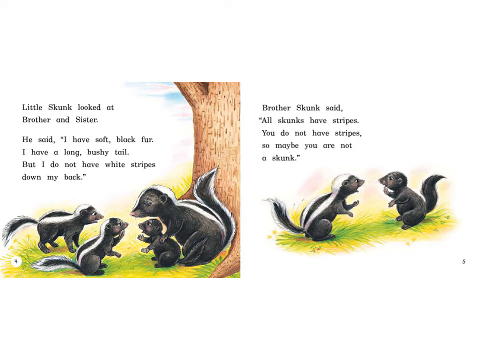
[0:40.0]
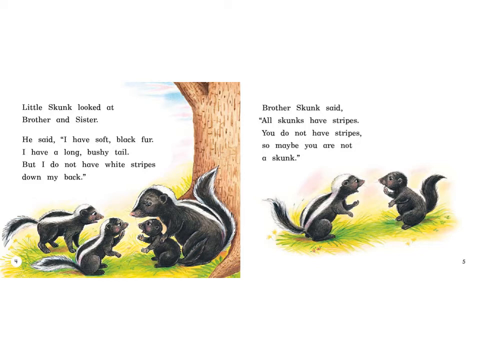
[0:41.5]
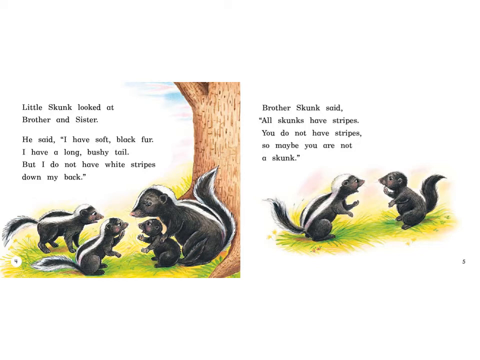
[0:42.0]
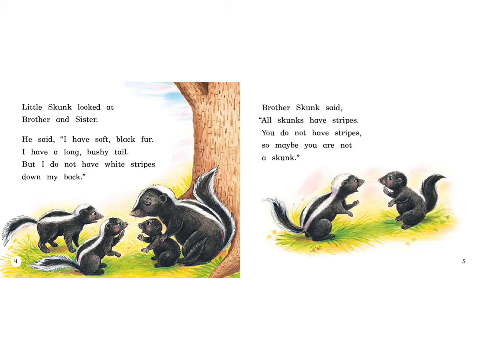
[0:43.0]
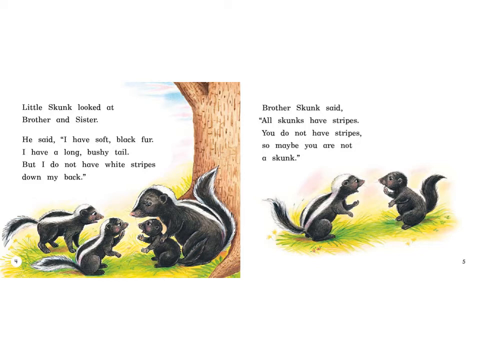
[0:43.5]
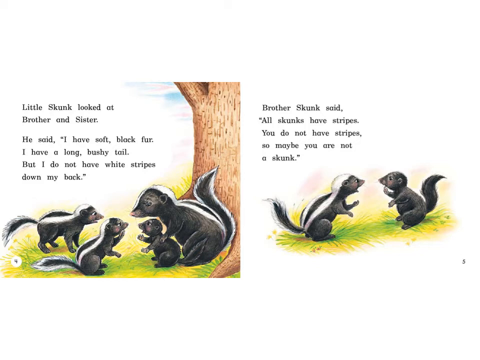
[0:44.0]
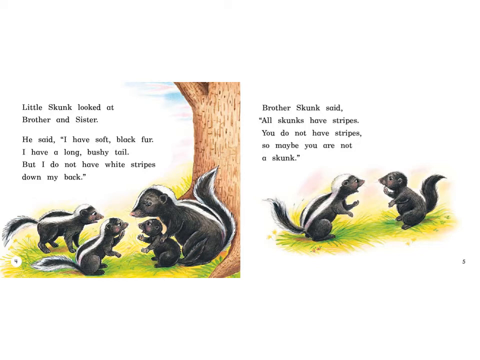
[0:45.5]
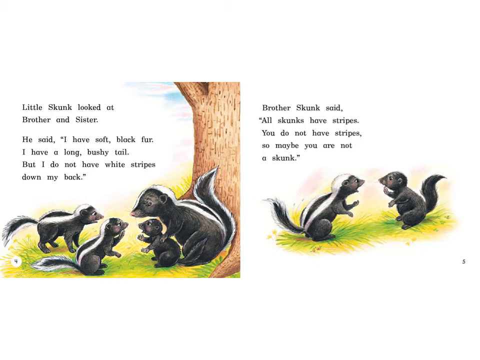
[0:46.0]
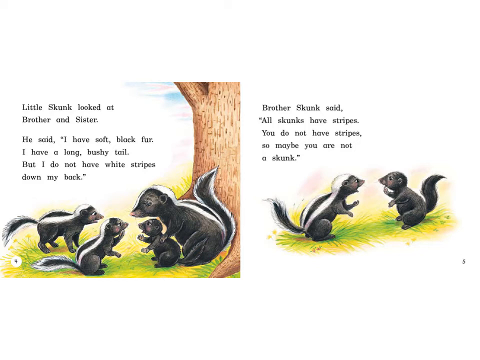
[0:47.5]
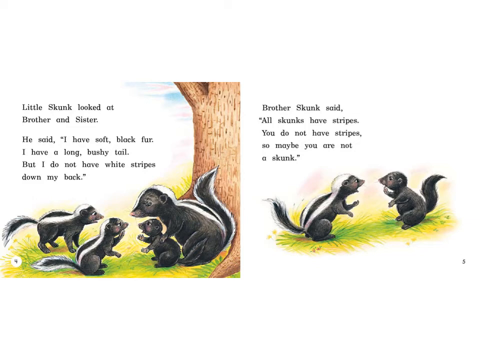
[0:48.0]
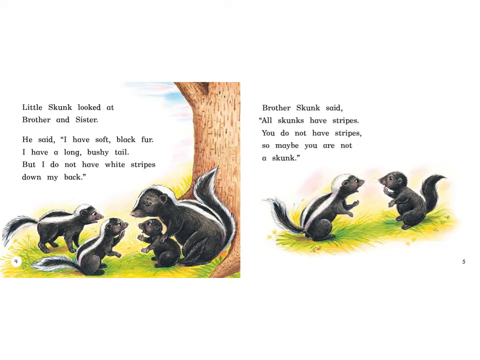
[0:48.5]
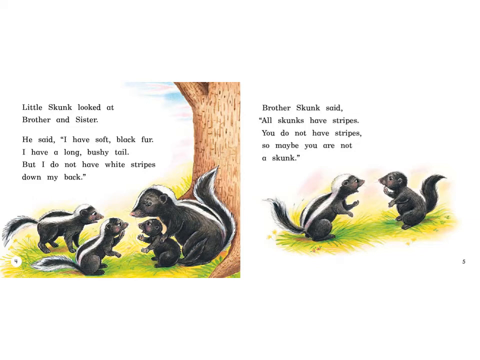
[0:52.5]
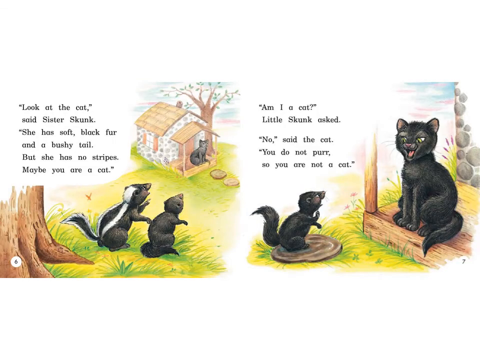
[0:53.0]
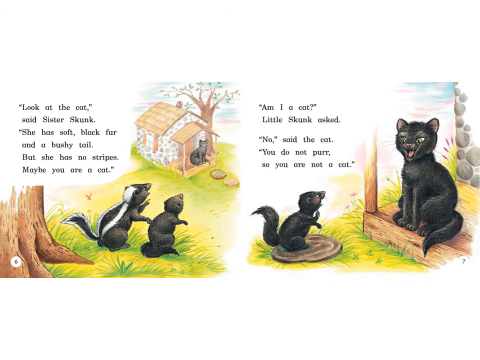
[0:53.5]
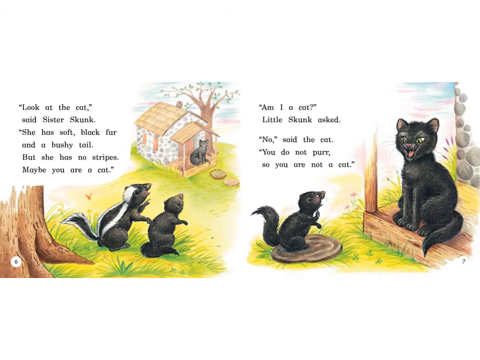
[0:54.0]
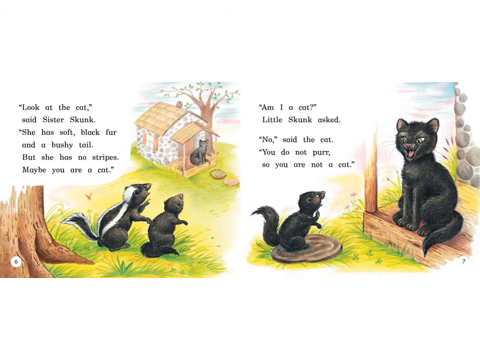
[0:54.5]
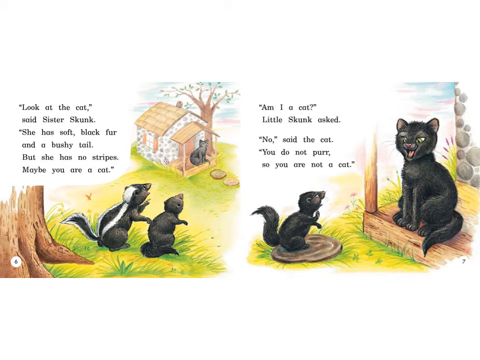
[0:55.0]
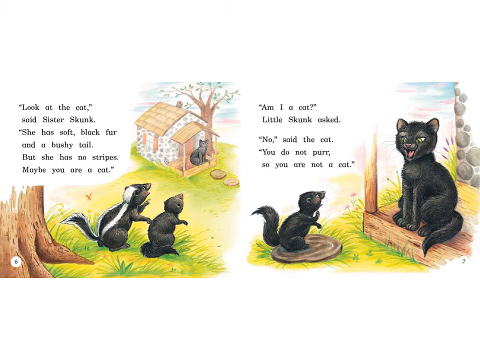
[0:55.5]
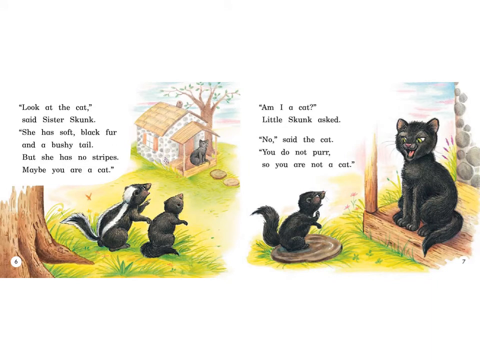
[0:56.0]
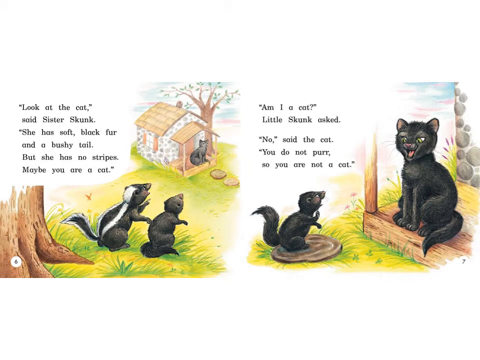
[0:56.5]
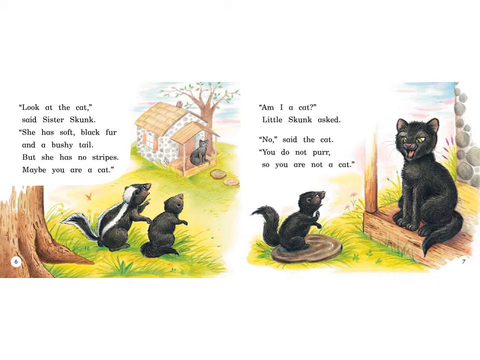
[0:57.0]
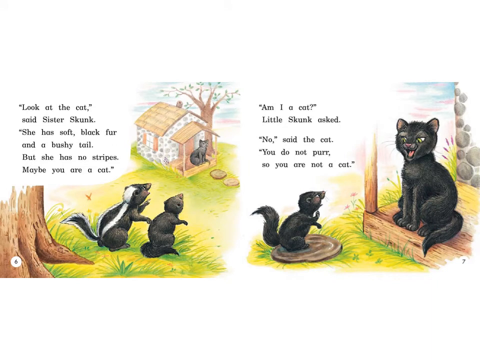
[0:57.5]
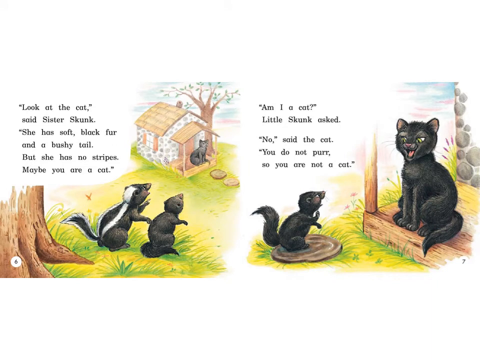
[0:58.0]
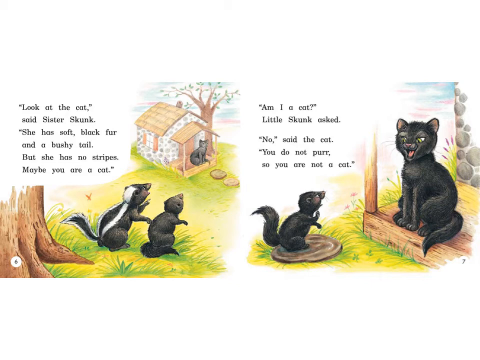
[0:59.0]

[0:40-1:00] Two skunks and a cat are seated outside a house in a garden. The text reads "Little skunk looked at brother and sister. He said, I have soft black fur, I have a long bushy tail, but I do not have white stripes down my back. Brother skunk said, all skunks have stripes, you do not have stripes, so maybe you are not a skunk." The skunks look like they start arguing. On the next page, two skunks look at a cat seated outside a house in the garden, and the text reads "Look at the cat, said sister skunk. She has soft black fur and a bushy tail, but she has no stripes. Maybe you are a cat." In the next scene the text reads "Am I a cat? Little skunk said. No, said the cat. You do not purr, so you are not a cat." The cat is seated in front of the entrance of the house on top of a wooden block, and the skunk is in front of the cat.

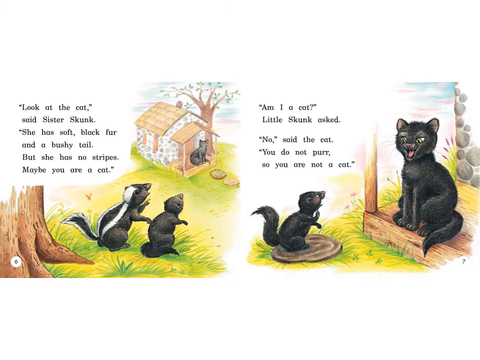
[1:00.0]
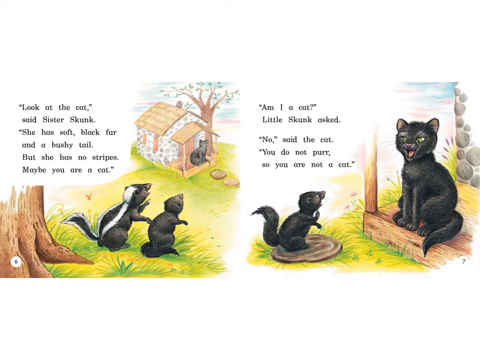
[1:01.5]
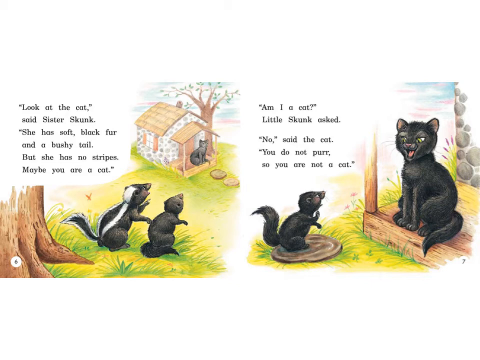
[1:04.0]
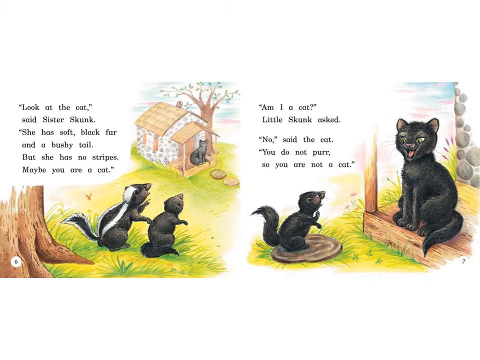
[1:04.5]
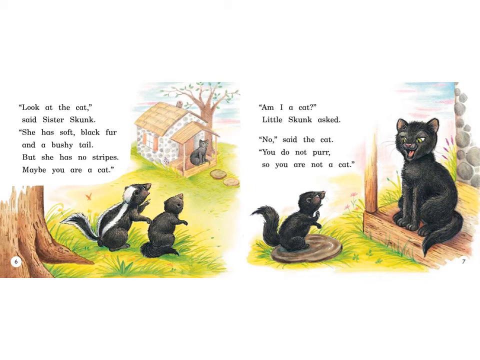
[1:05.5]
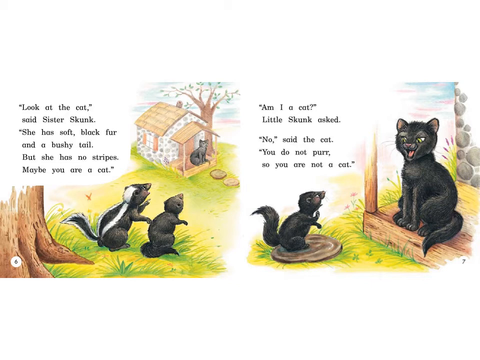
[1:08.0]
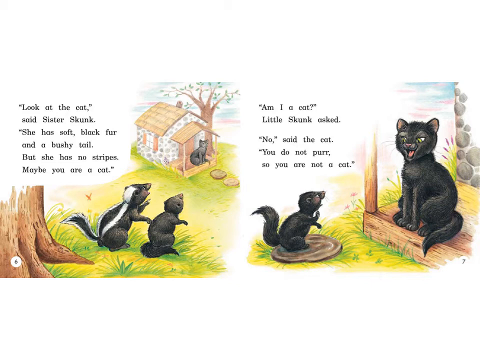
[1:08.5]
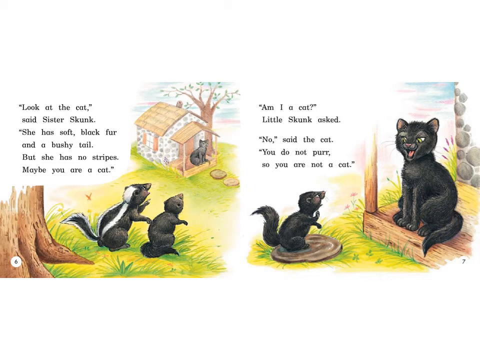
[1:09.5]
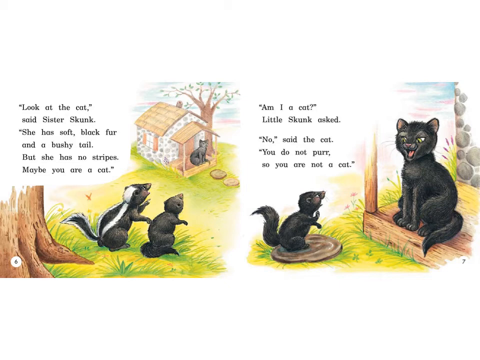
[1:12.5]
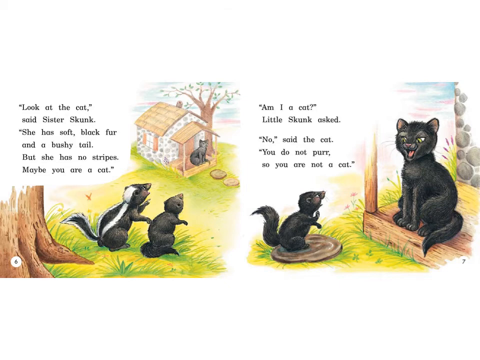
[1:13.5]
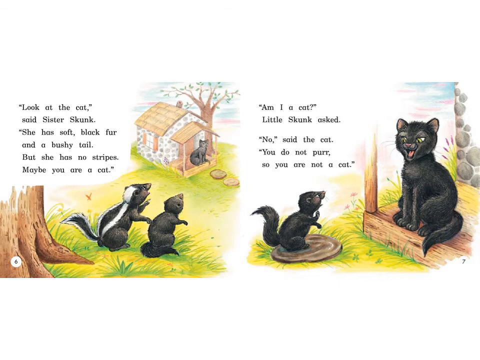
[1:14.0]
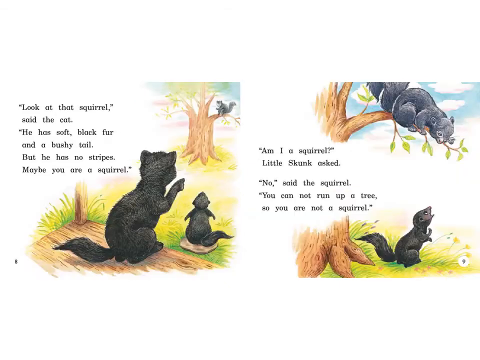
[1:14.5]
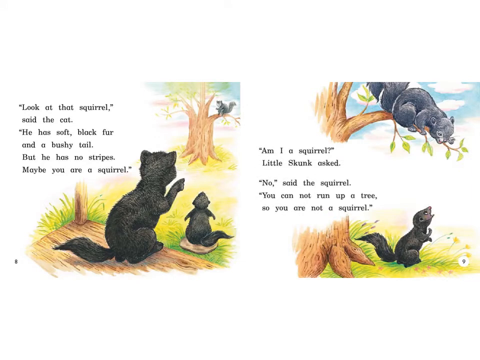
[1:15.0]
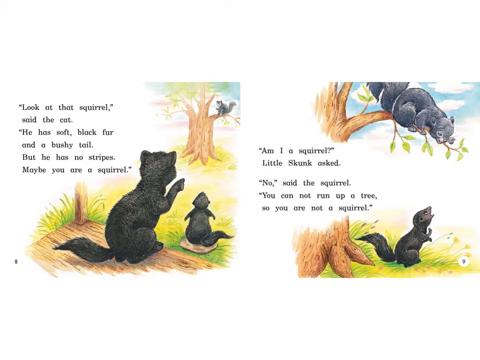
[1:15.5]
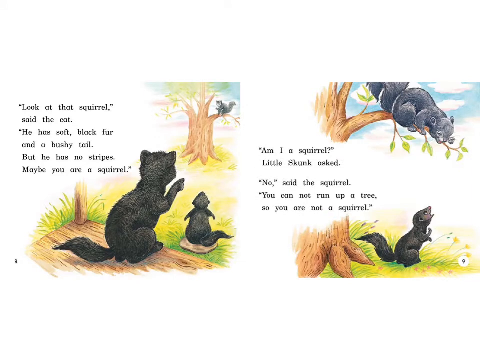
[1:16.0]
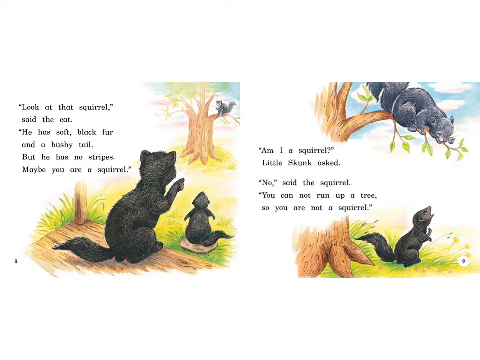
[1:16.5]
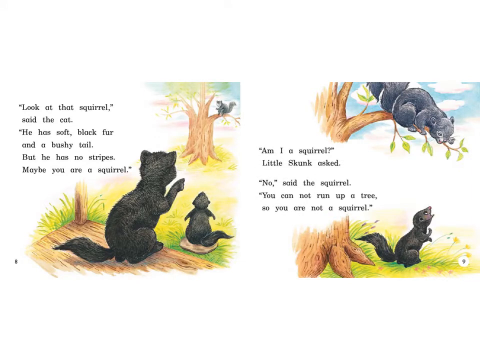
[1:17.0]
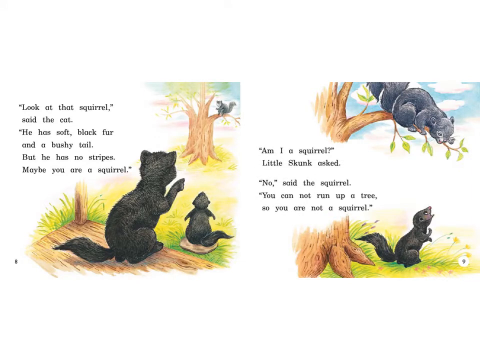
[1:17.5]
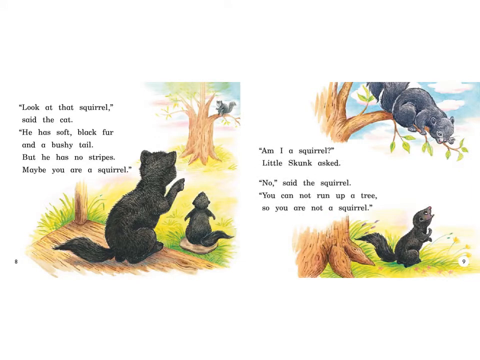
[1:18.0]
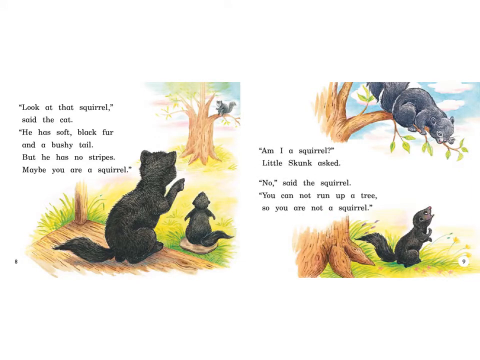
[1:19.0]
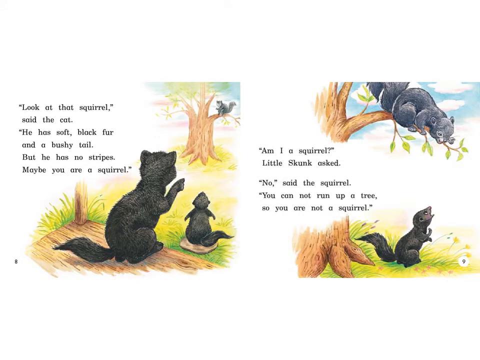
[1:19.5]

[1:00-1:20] Two skunks and a cat appear in a garden; the cat is seated at a house with a tree behind it. The text reads "Look at the cat, said Sister Skunk. She has soft, black fur and a bushy tail. But she has no stripes. Maybe you are a cat. Am I a cat? No, said the cat. You do not purr and so you are not a cat." Then it reads "Look at that squirrel, said the cat. He has soft, black fur and a bushy tail. But he has no stripes maybe you are a squirrel. Am I a squirrel? Little skunk asked. No! said the squirrel. You can not run up a tree so you are not a squirrel." A skunk and a squirrel are arguing about whether the skunk is a squirrel, while the cat looks at them both.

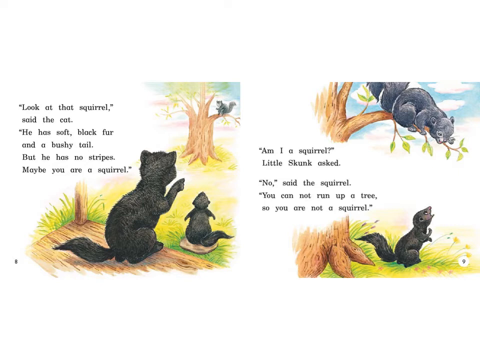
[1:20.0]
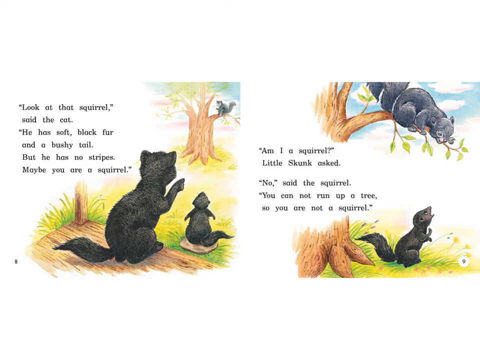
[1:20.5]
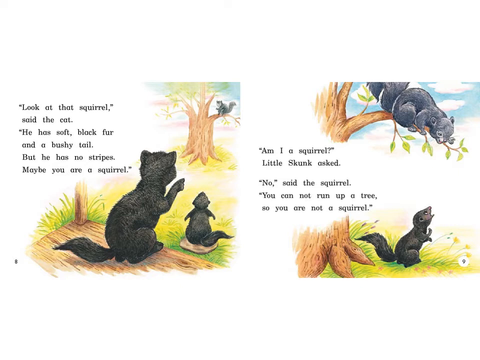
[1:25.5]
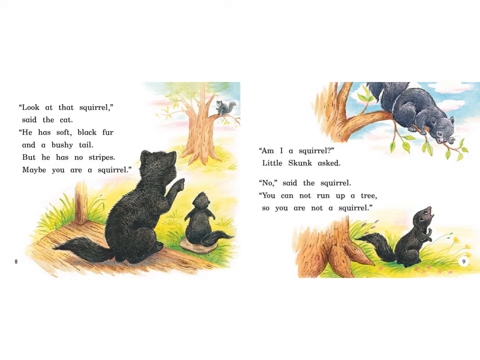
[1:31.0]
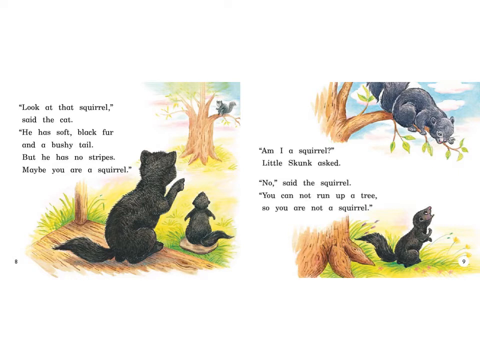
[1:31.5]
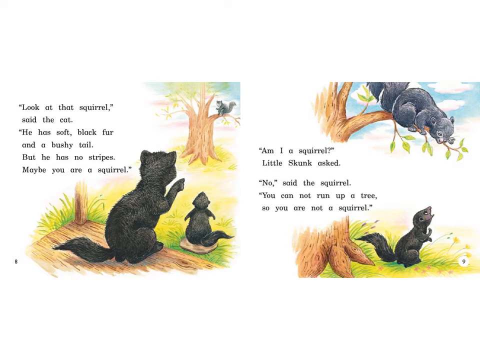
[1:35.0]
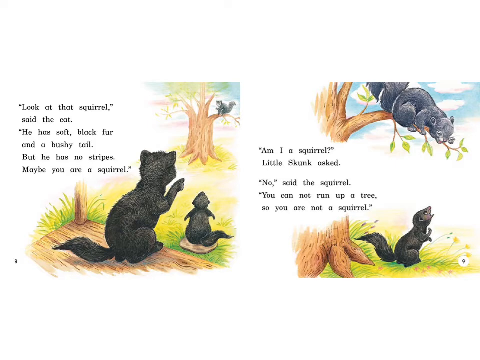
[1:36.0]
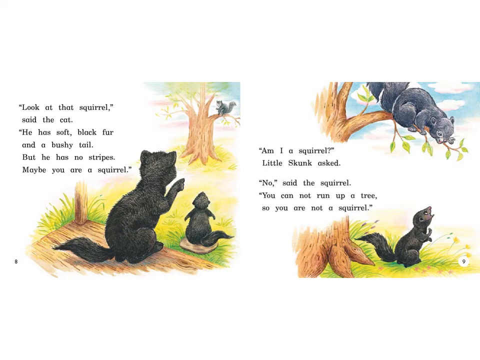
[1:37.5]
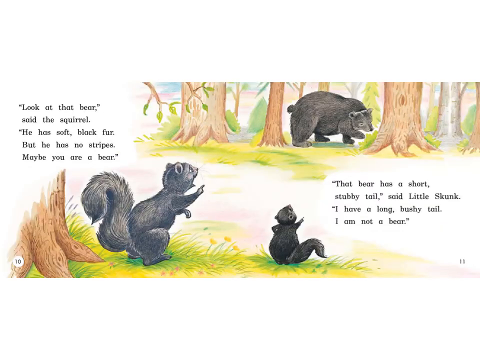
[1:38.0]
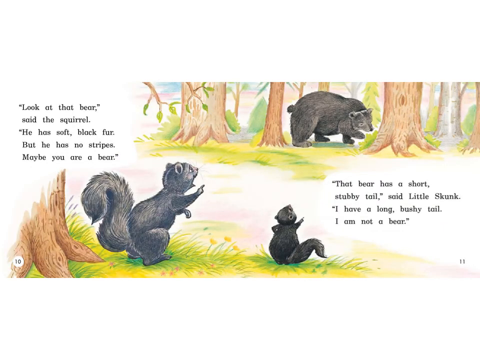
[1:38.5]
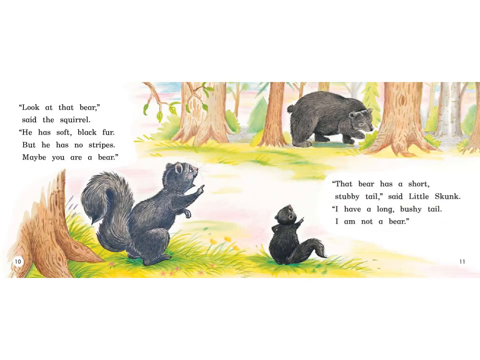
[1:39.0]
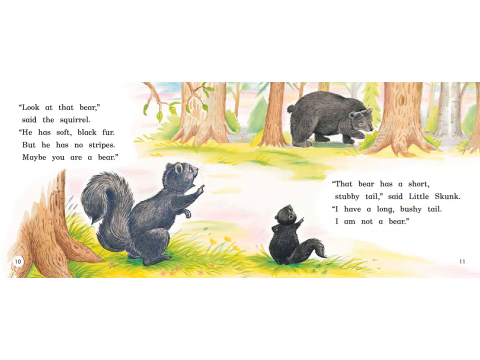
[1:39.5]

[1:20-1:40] A picture shows a skunk, a cat and a squirrel, with the text "Look at that squirrel, said the cat. He has soft black fur and a bushy tail, but he has no stripes Maybe you are a squirrel." The squirrel is seated on top of a tree, while the skunk and the cat are down on the grass outside a house. The skunk then goes near the squirrel, and the text reads "Am I a squirrel? Little skunk asked. No, said the squirrel. You cannot run up a tree, so you are not a squirrel." The skunk is down below looking at the squirrel up in the tree. On the next page, a bear is passing through a forest with very many trees, and the squirrels approach. The text reads "Look at that bear, said the squirrel. He has soft black fur but he has no stripes. Maybe you are a bear. That bear has a short stubby tail, said little skunk. I have a long, bushy tail. I am not a bear."